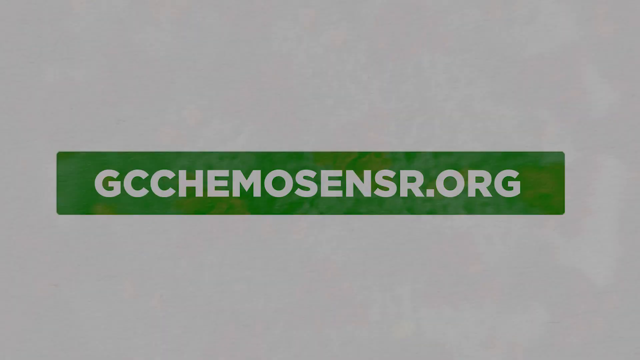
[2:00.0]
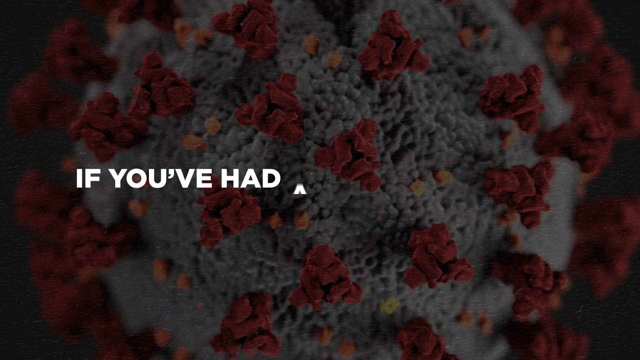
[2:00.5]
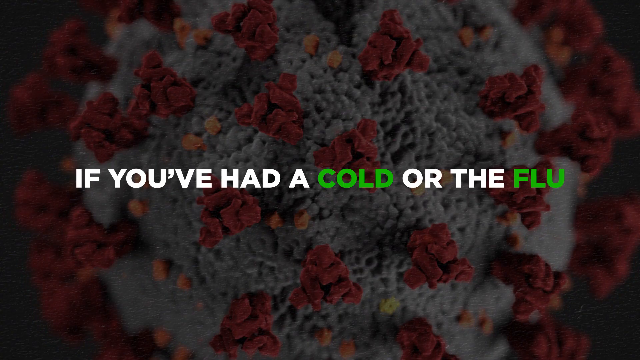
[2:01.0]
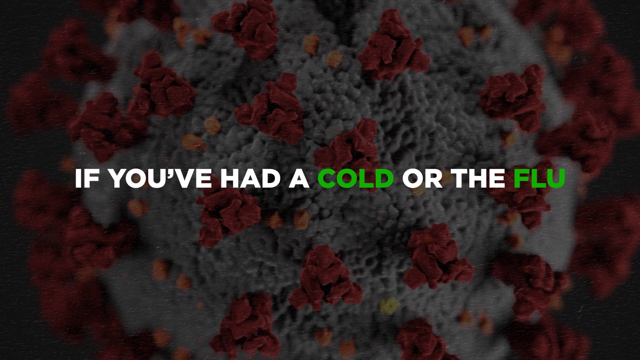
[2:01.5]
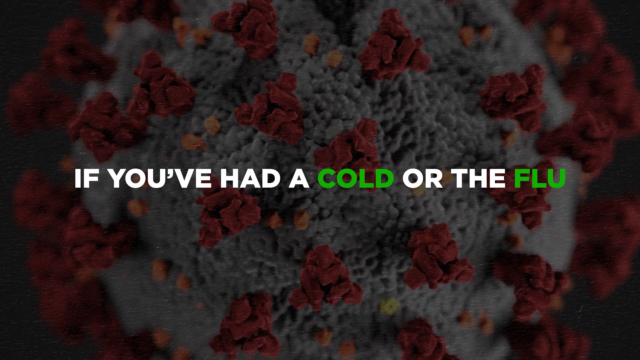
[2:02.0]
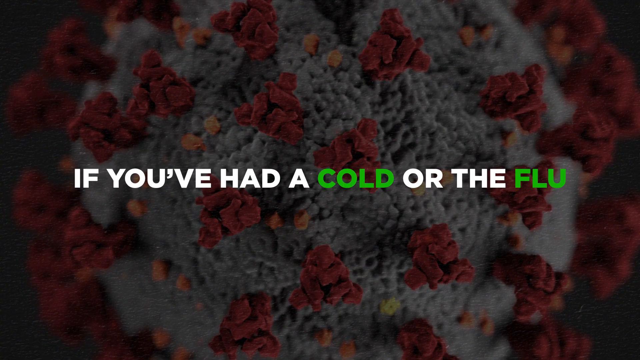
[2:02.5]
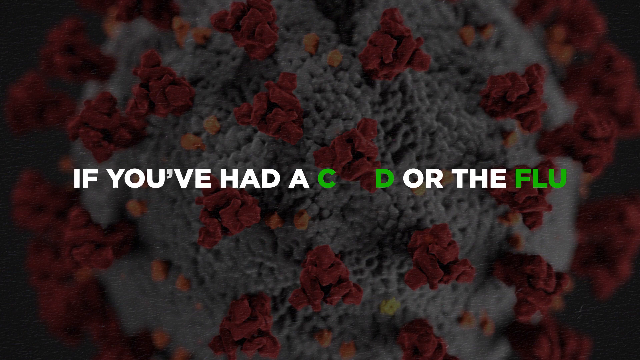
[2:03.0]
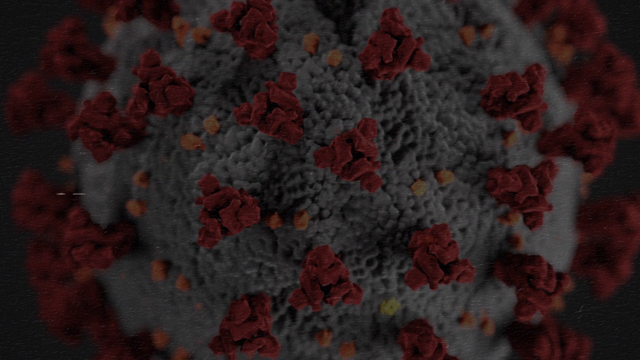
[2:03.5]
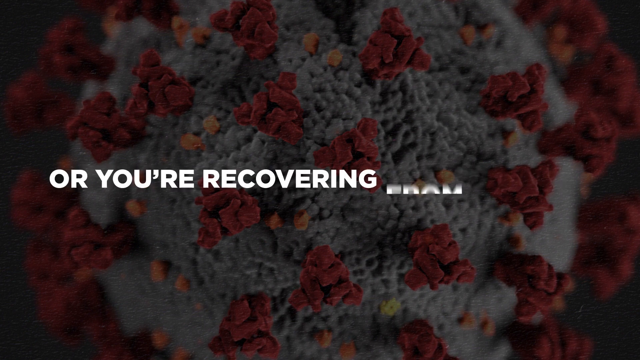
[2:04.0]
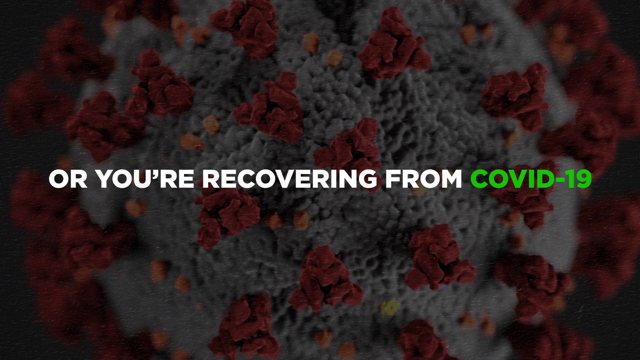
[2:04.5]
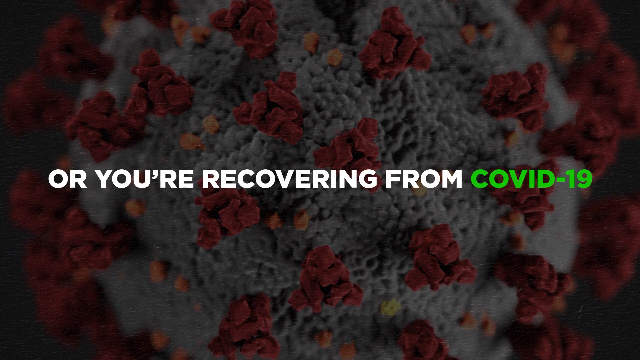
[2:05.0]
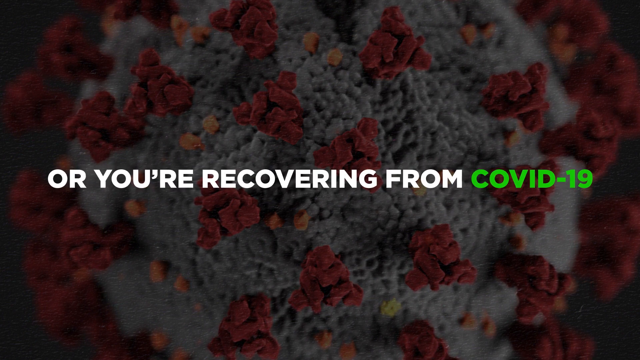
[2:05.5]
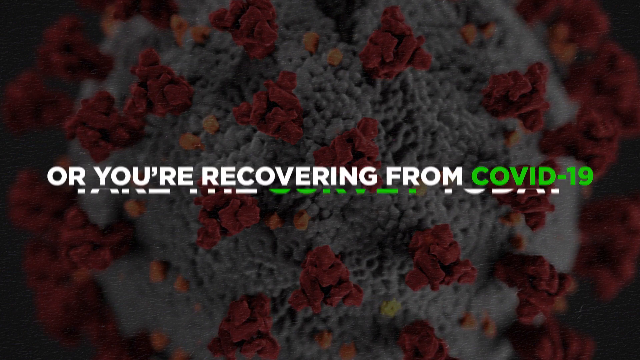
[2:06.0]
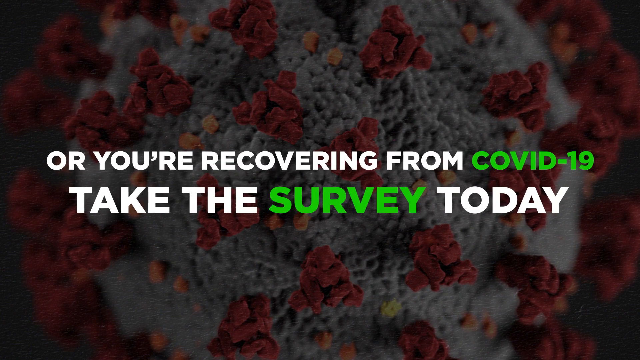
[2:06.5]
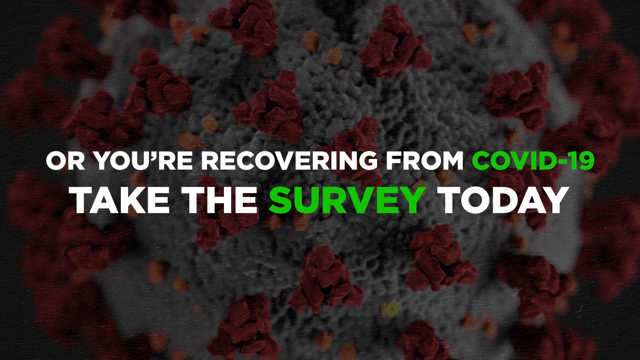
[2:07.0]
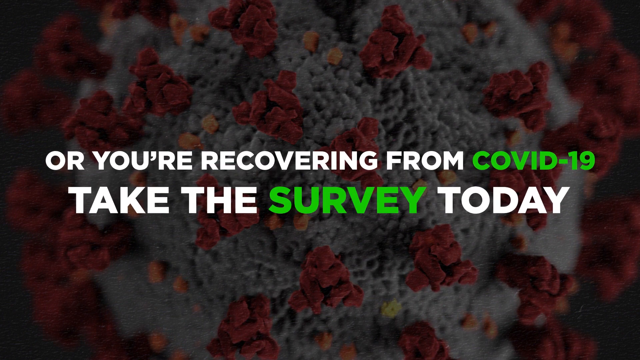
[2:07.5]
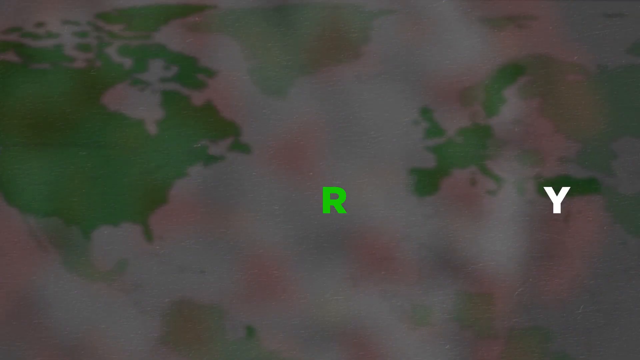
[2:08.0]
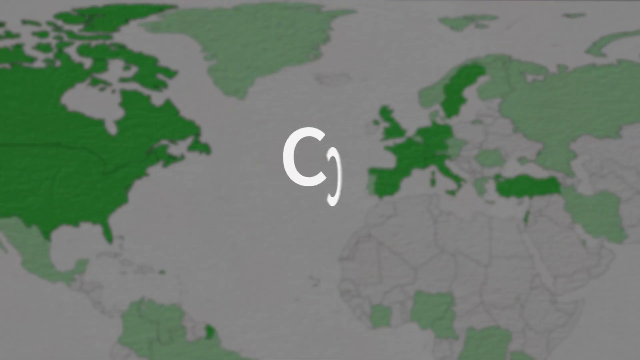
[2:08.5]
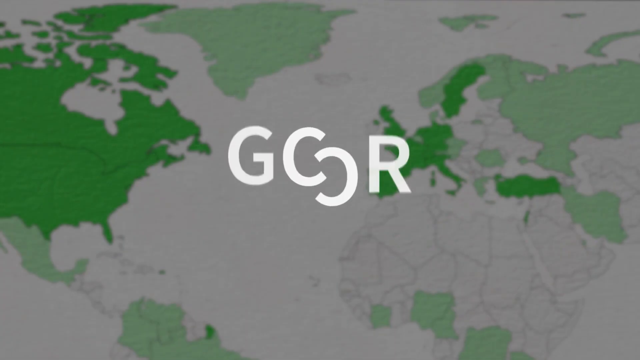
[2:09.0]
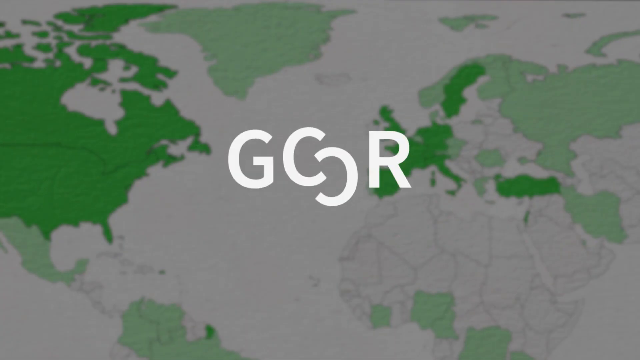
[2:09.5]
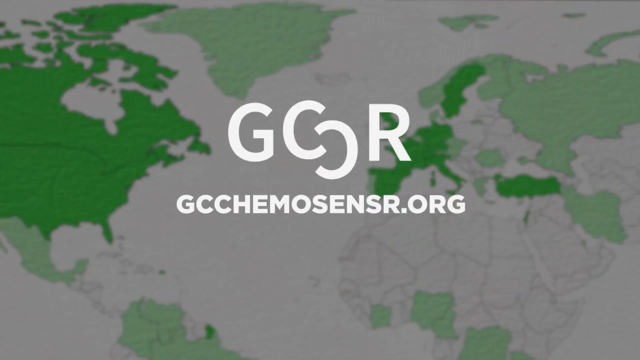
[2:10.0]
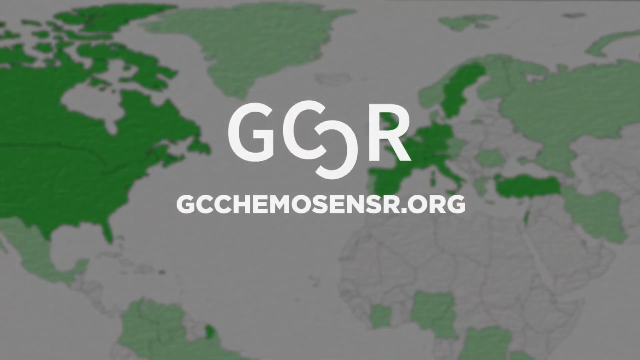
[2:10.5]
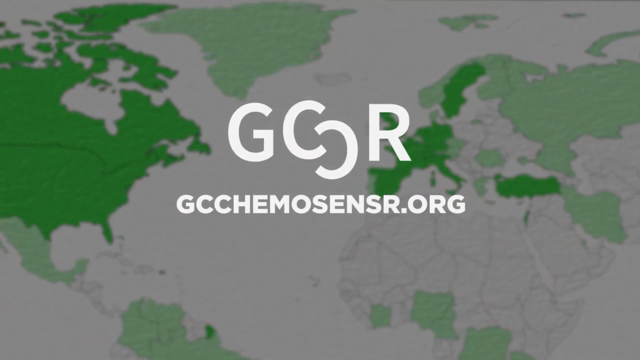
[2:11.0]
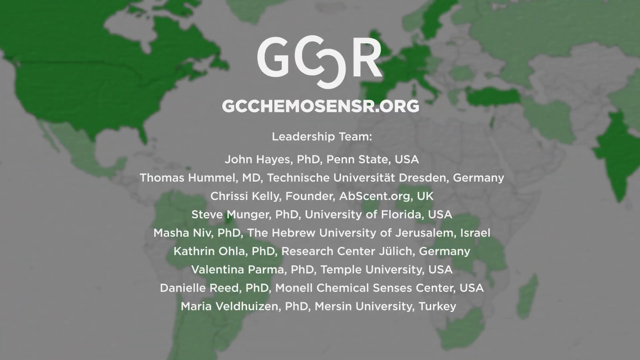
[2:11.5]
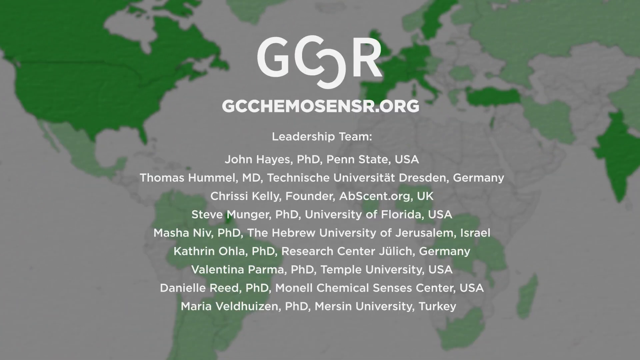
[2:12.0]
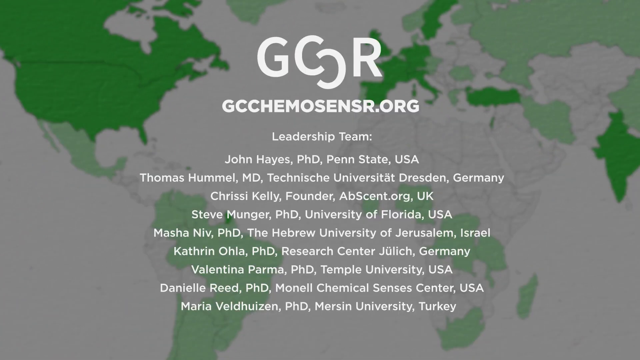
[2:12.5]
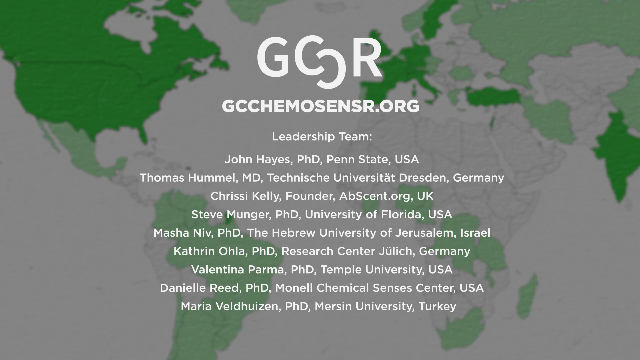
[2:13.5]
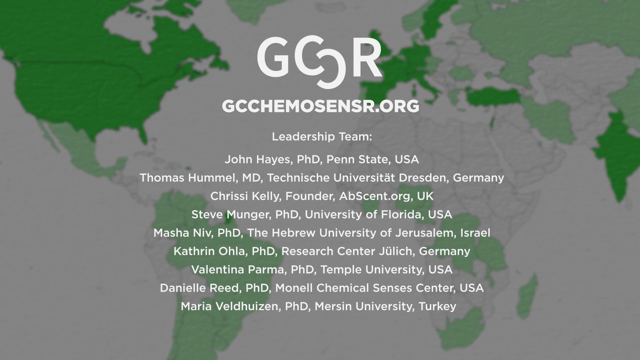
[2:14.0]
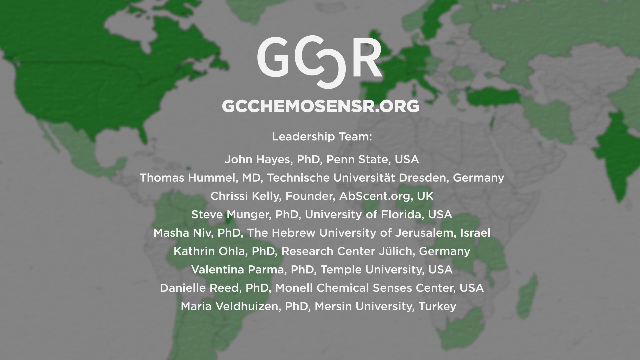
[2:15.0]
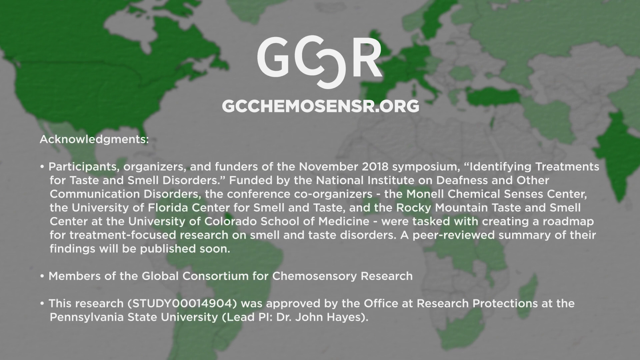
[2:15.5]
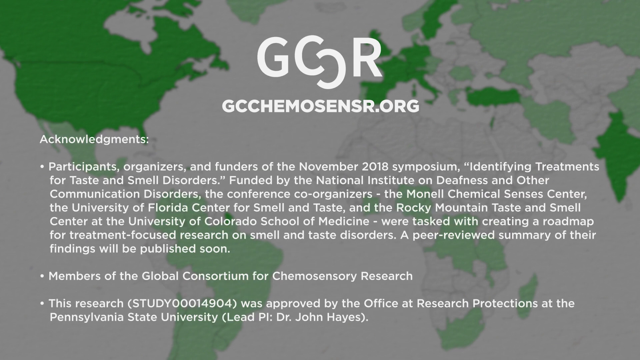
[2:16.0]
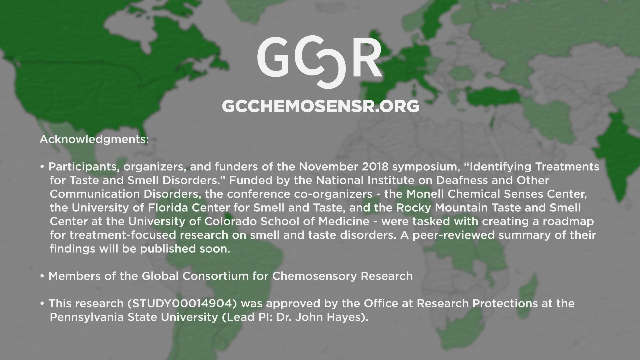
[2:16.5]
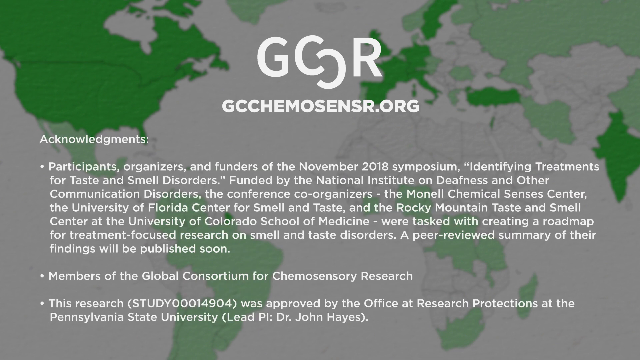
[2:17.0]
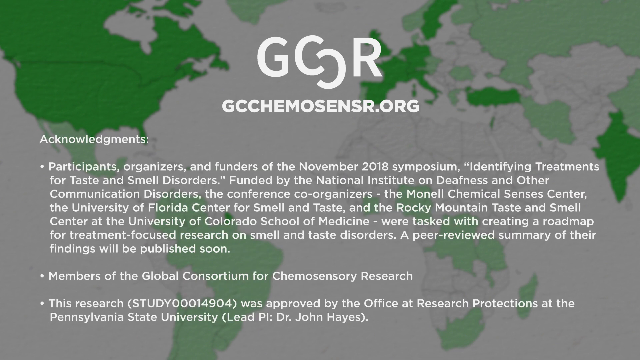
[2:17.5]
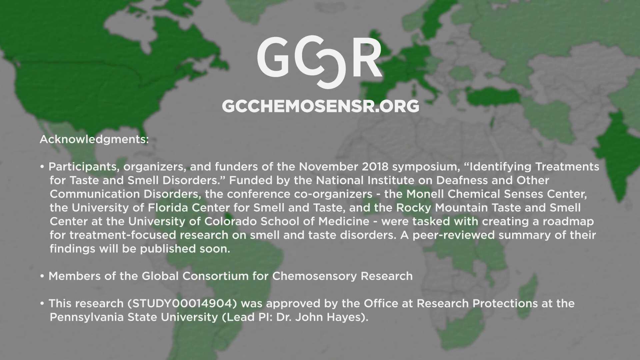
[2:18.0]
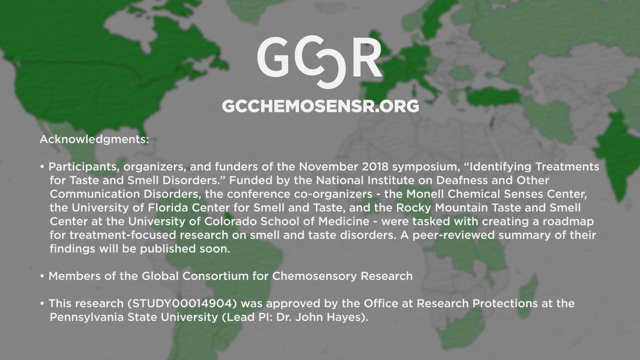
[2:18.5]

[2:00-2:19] On a white screen, a long green rectangle in the middle contains a web address in white capital letters. The screen then turns dark with a picture in the background of a COVID-19 bacteria, gray with little red triangles sticking off it all over. Across the middle of the screen it reads "if you had a cold or flu," with "cold" and "flu" in green, followed by text mentioning "COVID-19" in green, and "take the survey," also in green, "today." The screen then changes to a green and gray map showing all the countries in green, a couple in light gray, with gray water. Across the middle of the screen it reads "GCCR" with a web address beneath it.